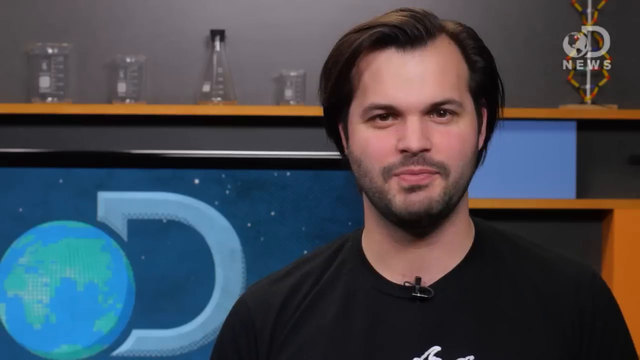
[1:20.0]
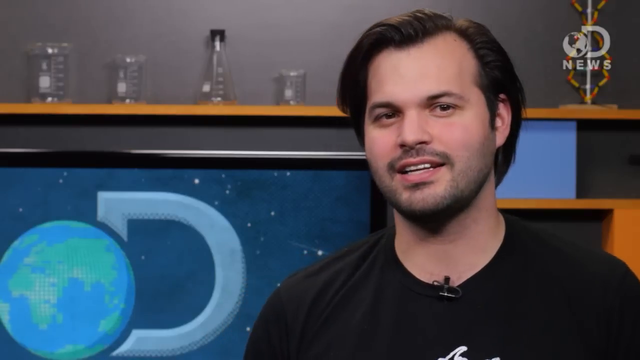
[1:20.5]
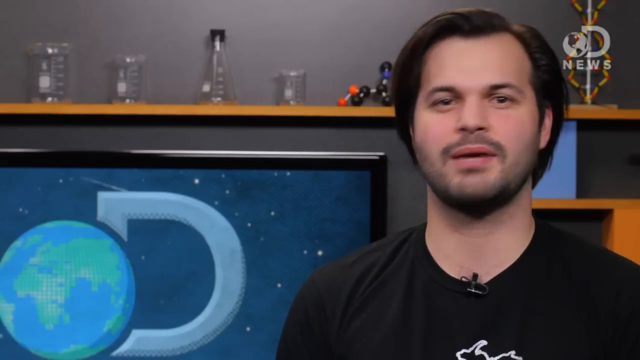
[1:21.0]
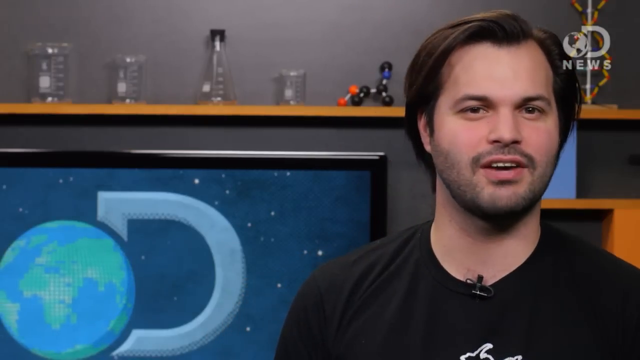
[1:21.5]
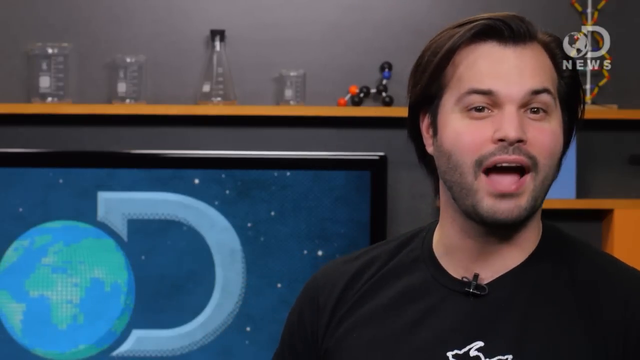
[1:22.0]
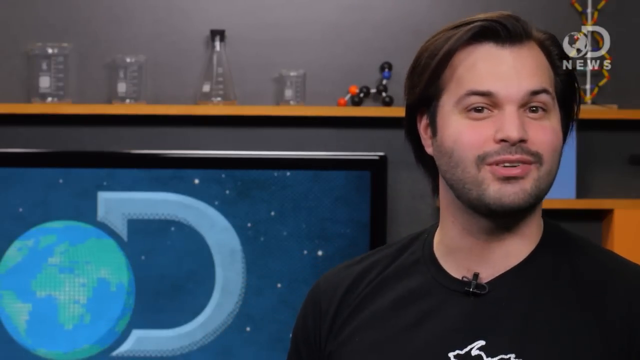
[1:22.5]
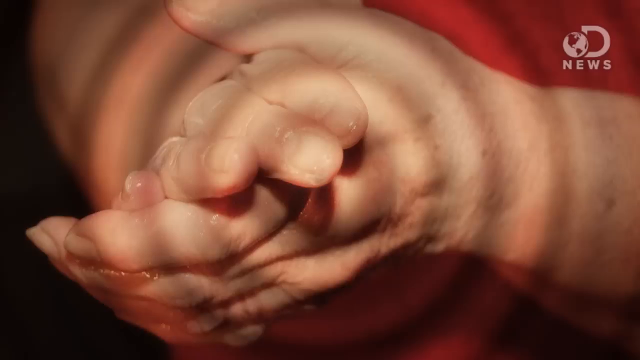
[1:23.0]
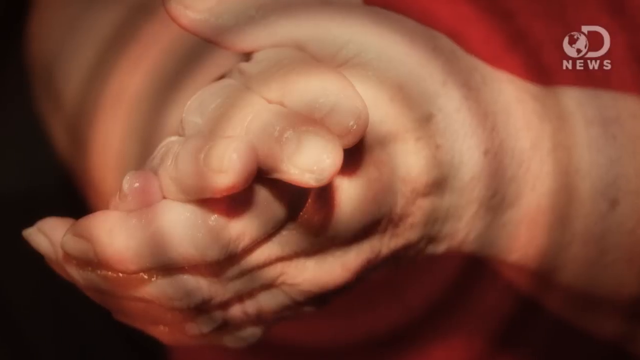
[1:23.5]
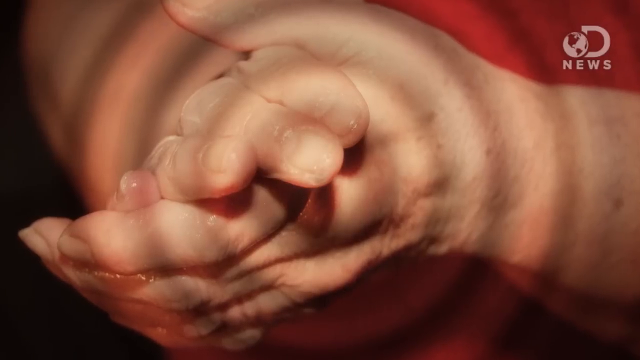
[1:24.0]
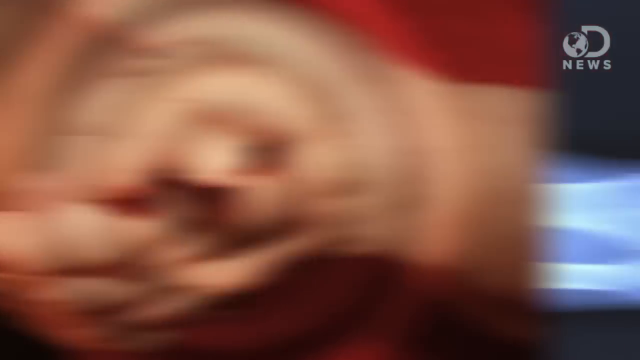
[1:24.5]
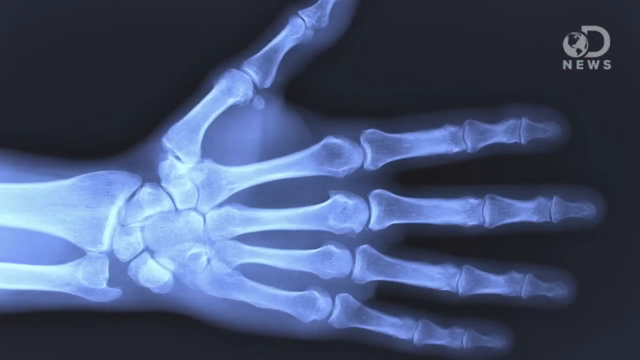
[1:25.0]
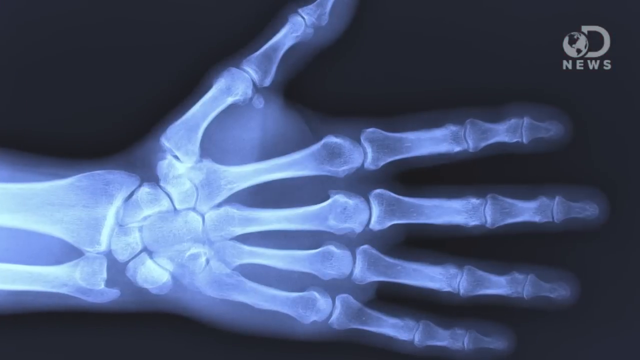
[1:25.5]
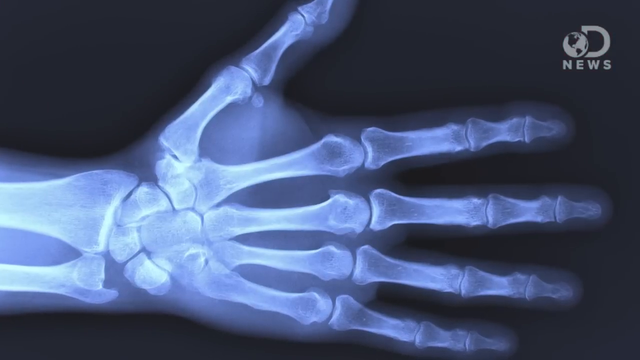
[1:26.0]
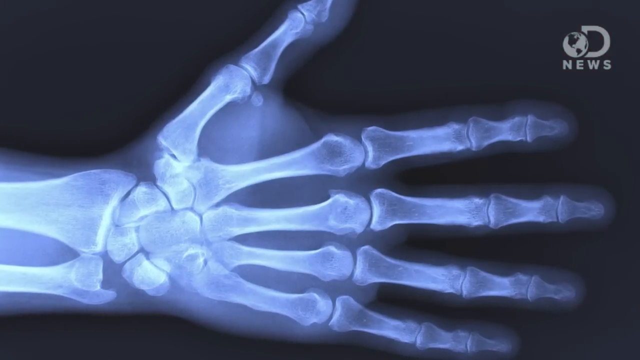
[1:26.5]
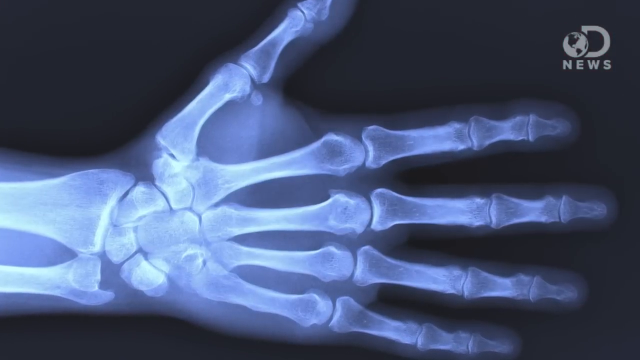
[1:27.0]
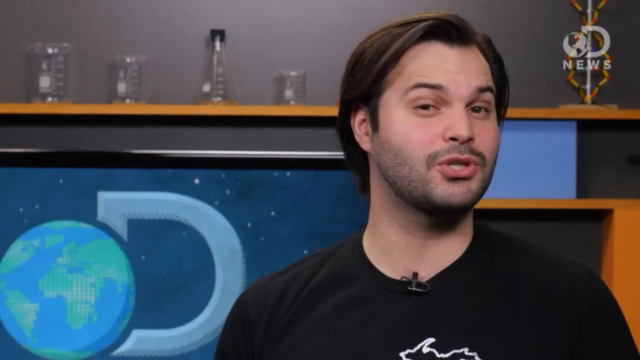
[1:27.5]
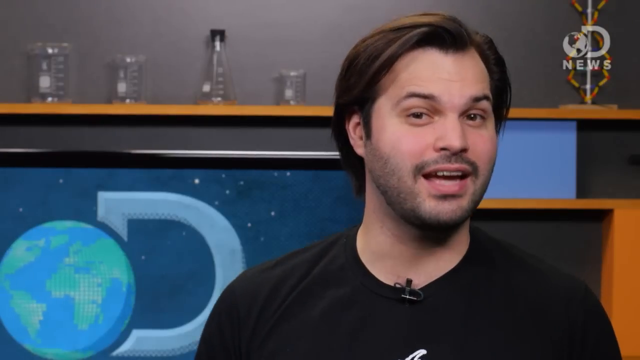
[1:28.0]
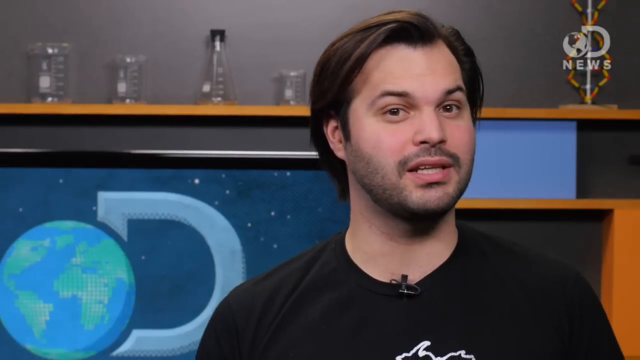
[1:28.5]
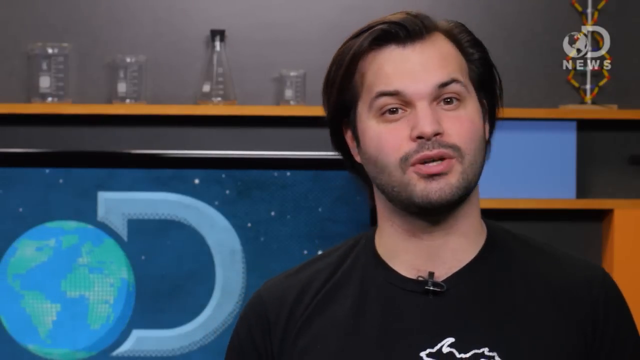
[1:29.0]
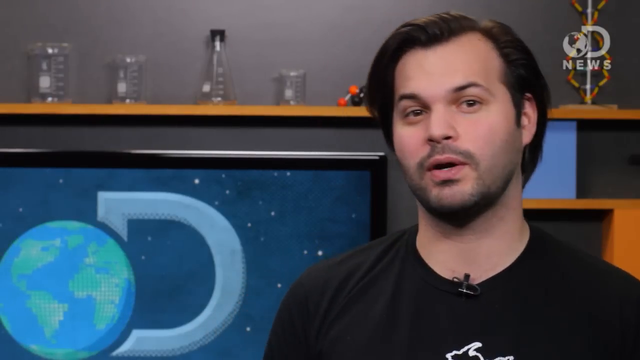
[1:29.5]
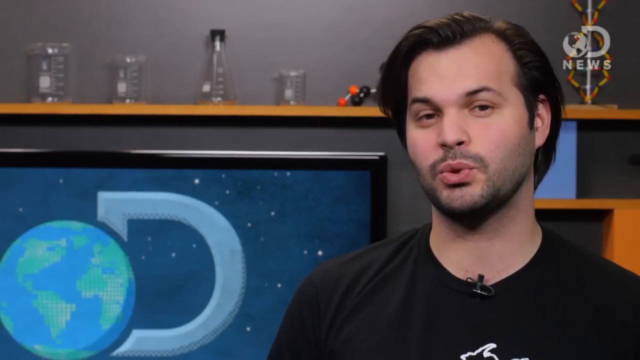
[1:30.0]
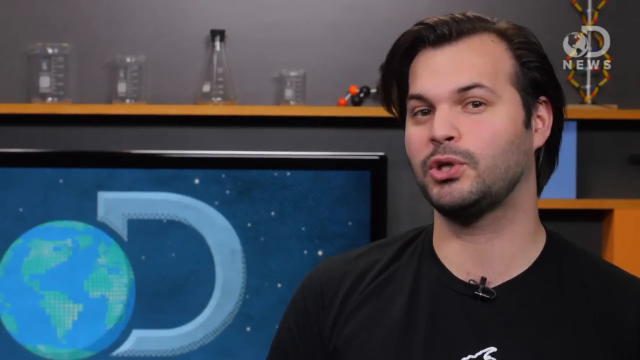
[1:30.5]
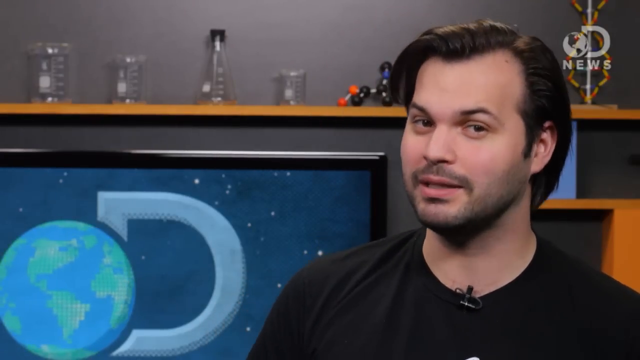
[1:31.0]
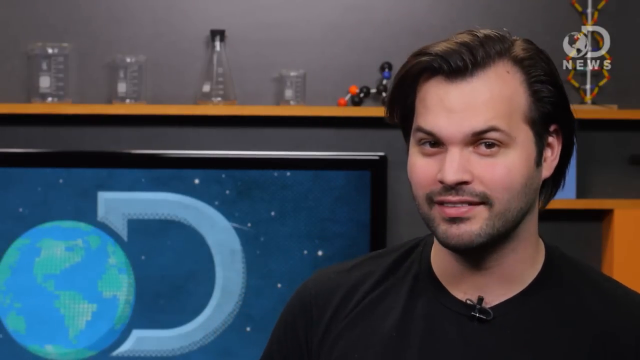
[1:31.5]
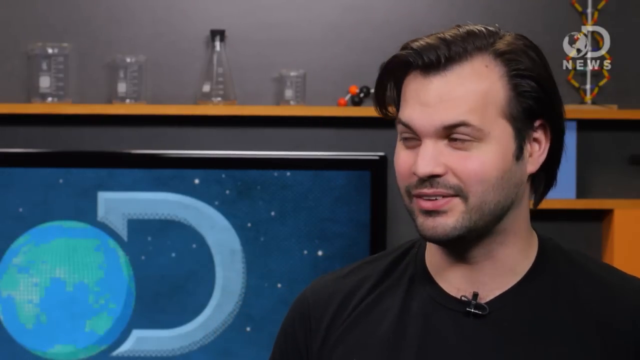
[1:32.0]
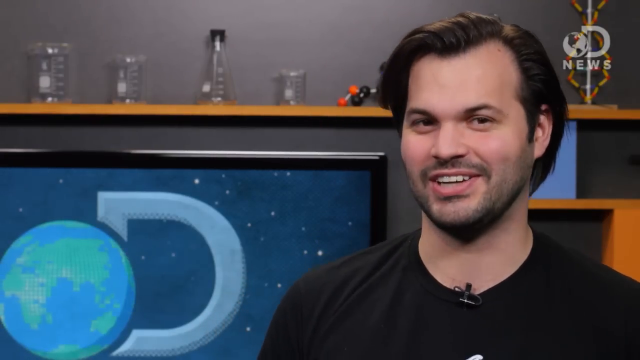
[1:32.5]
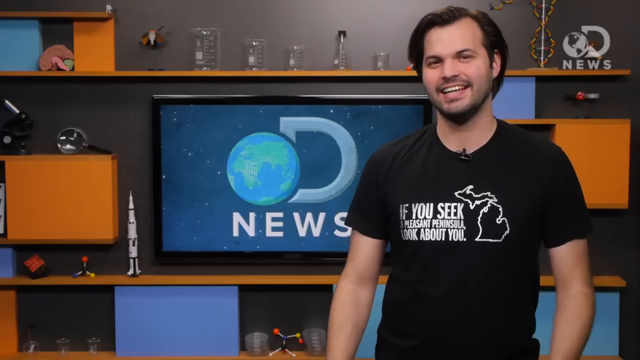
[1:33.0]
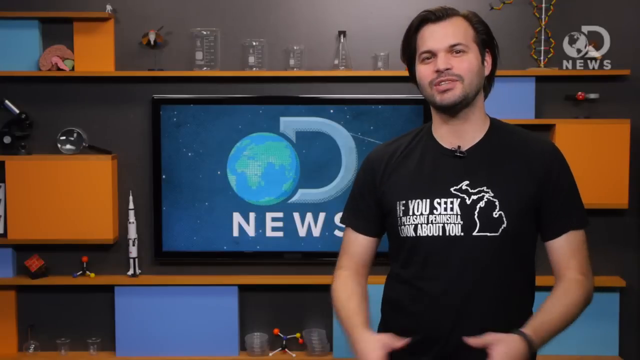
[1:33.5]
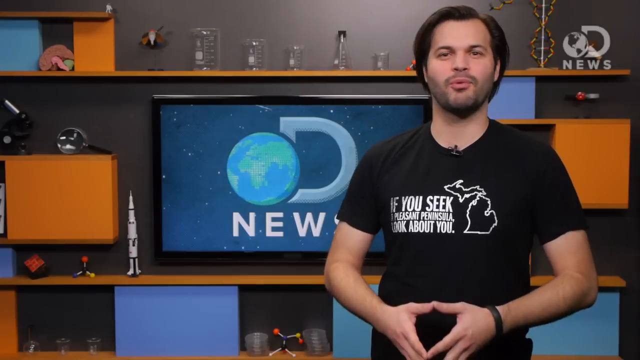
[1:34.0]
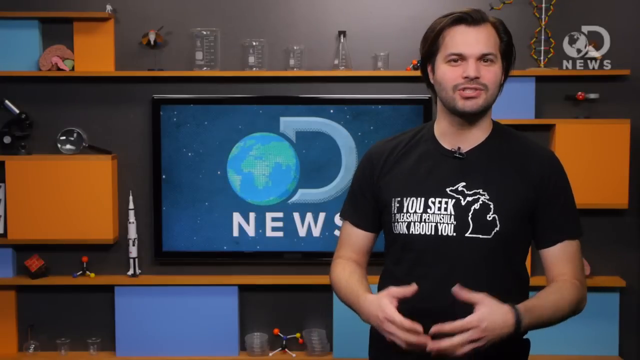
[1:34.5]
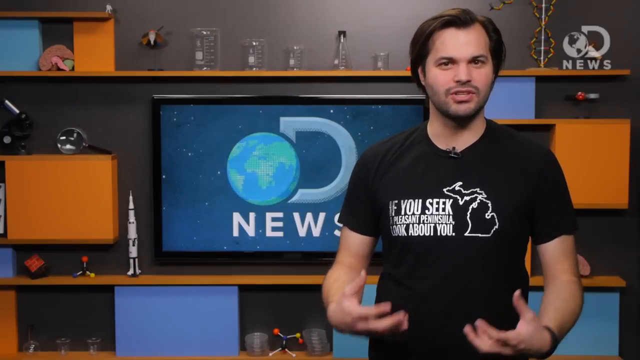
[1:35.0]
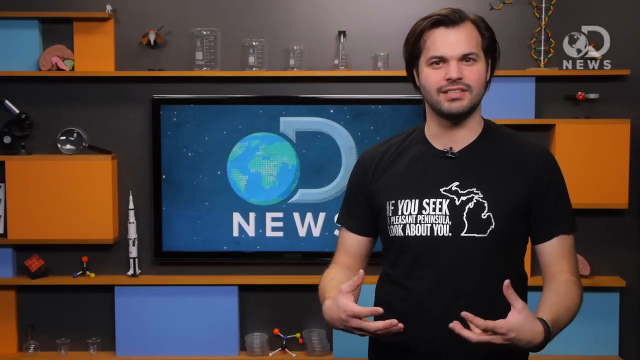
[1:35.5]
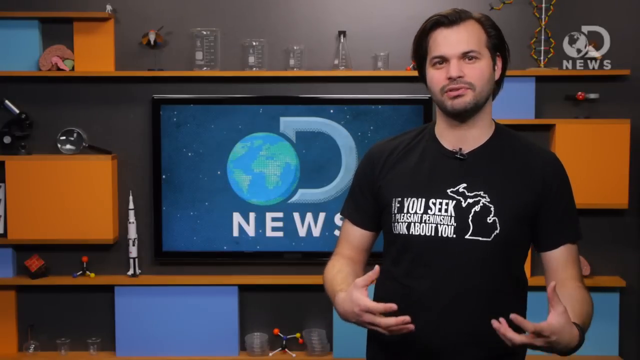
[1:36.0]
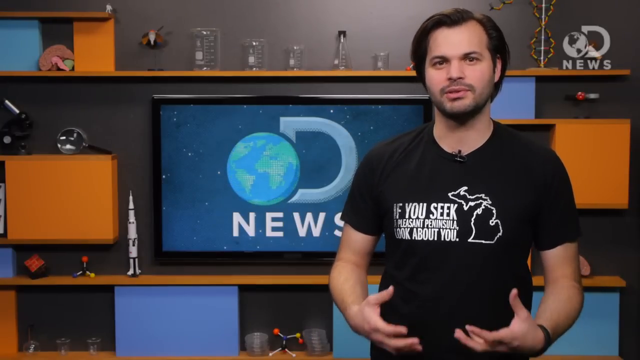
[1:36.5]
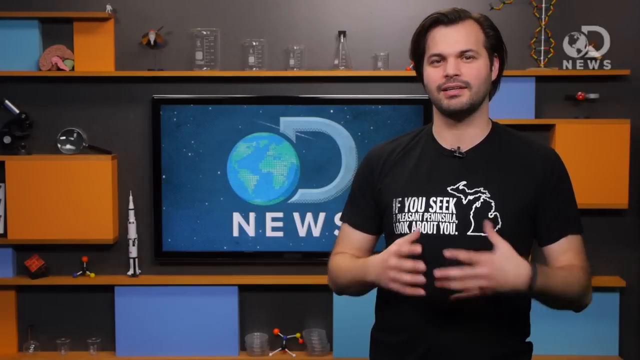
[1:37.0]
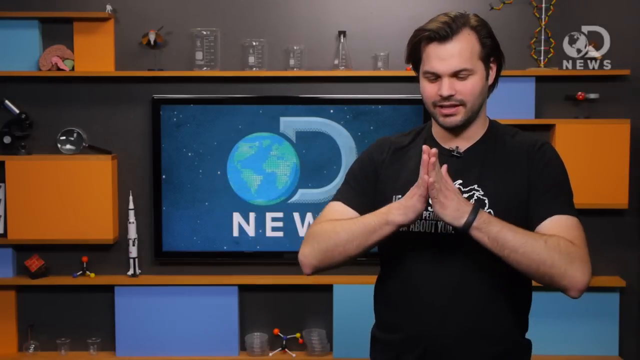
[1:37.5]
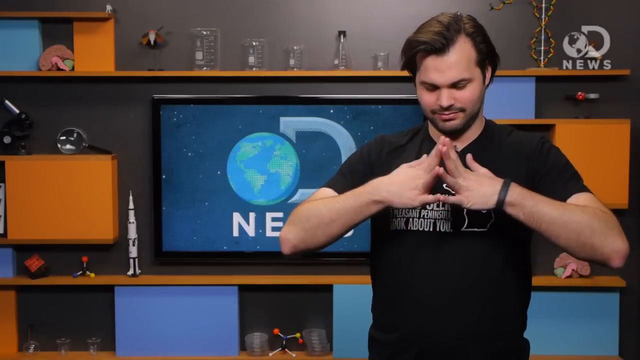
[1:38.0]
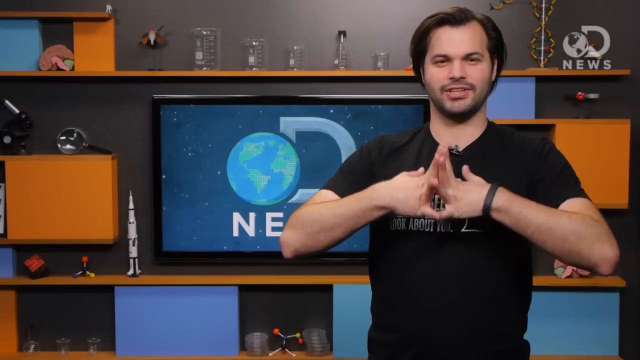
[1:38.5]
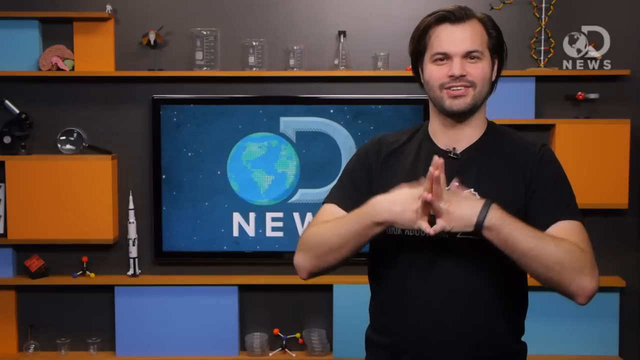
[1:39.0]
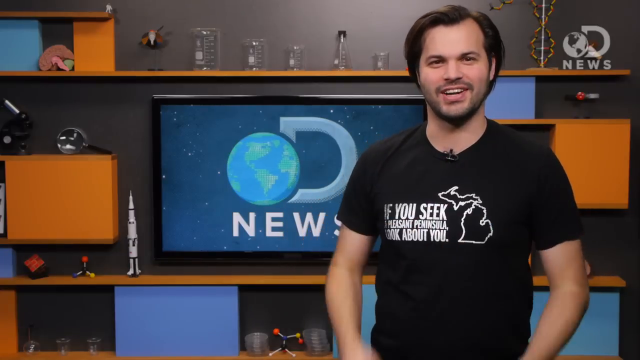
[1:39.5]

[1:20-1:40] The D News anchor wears a t-shirt referencing the state of Michigan. An x-ray of a human hand appears, along with Trace, followed by a close-up of someone's pair of hands in full color, and a skeleton image of a human hand. Up in the far right corner behind Trace's head is a model of DNA.